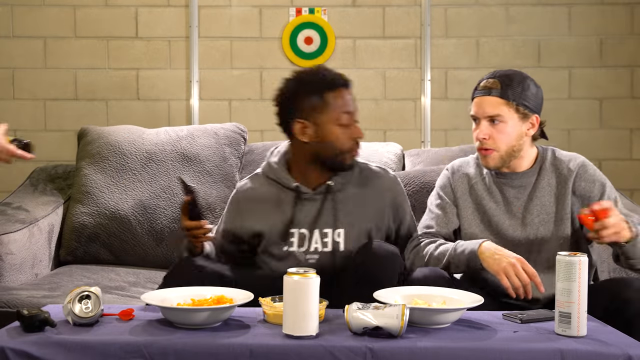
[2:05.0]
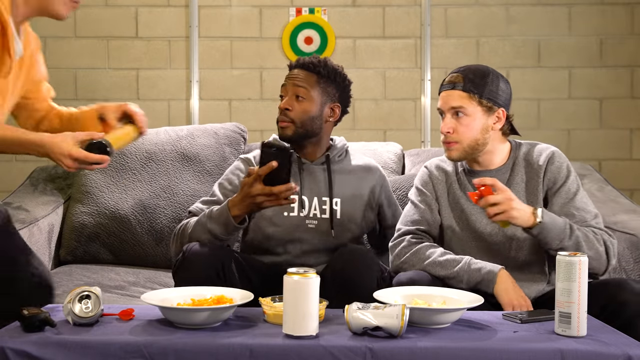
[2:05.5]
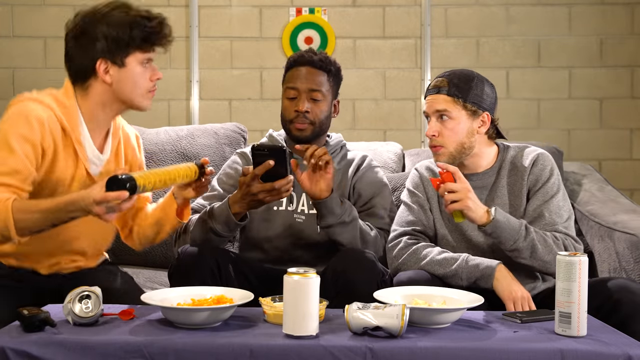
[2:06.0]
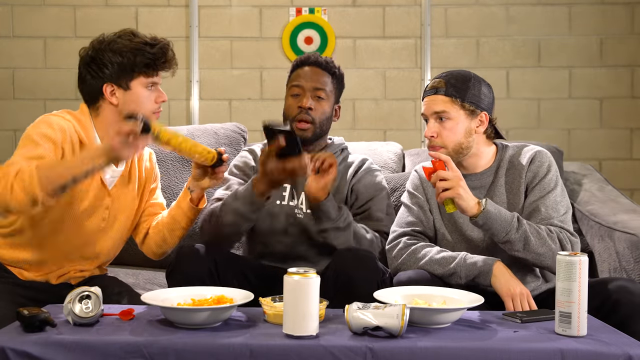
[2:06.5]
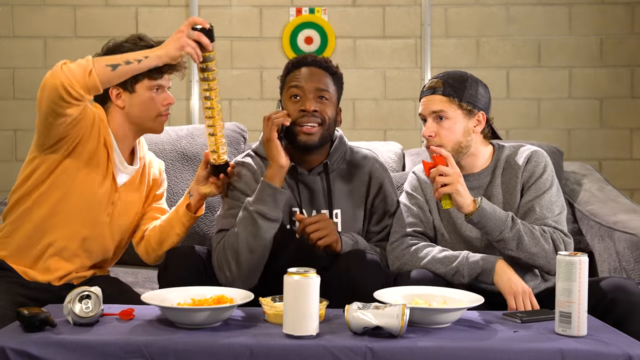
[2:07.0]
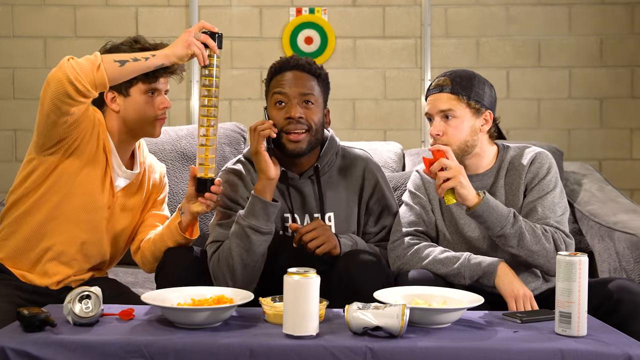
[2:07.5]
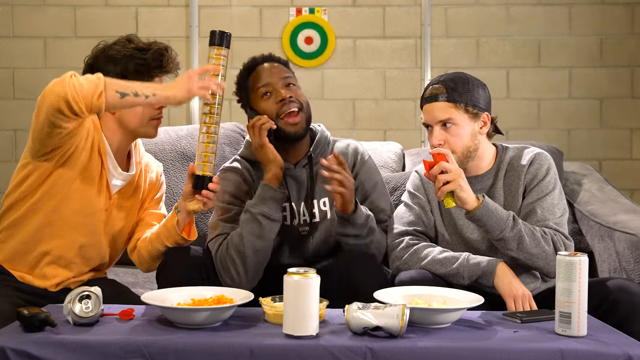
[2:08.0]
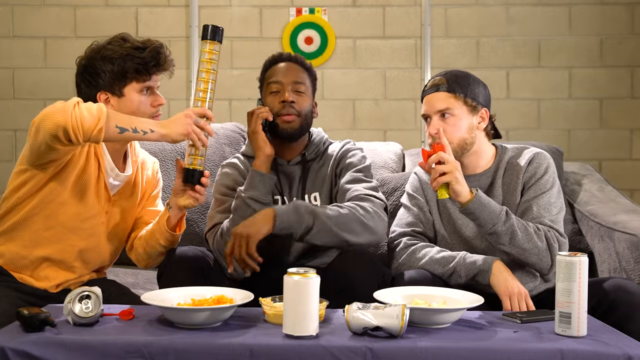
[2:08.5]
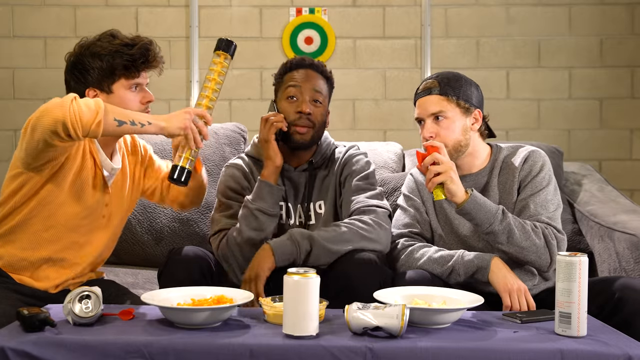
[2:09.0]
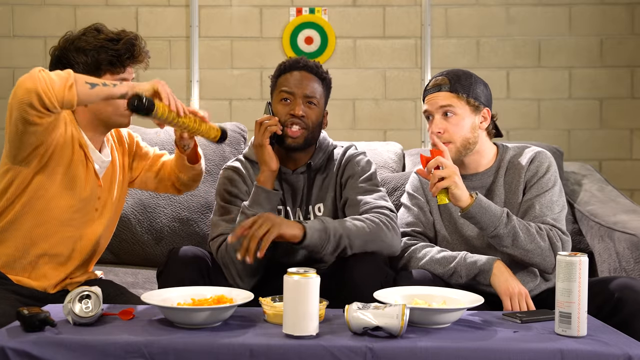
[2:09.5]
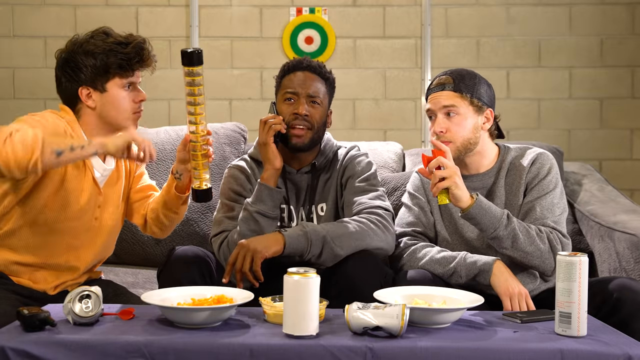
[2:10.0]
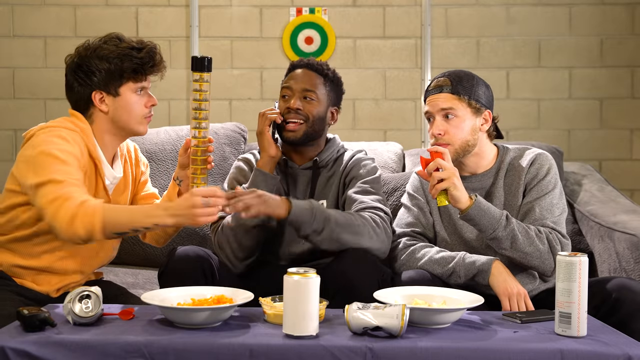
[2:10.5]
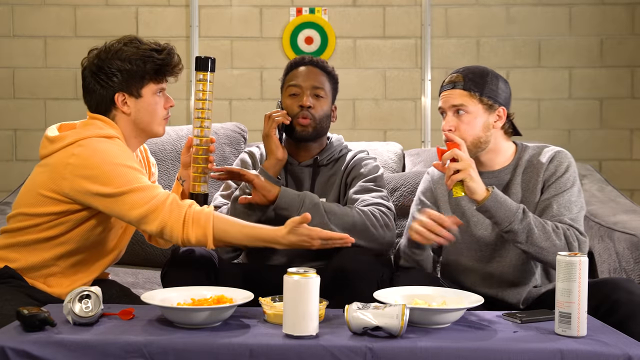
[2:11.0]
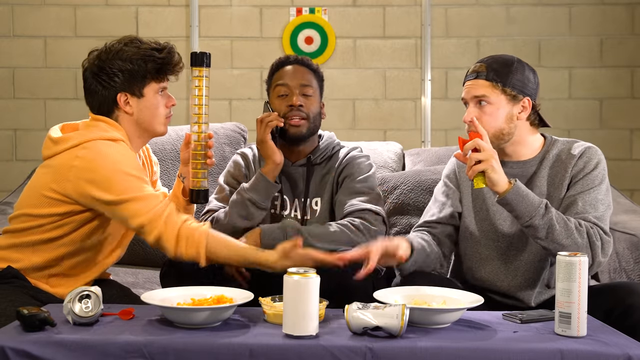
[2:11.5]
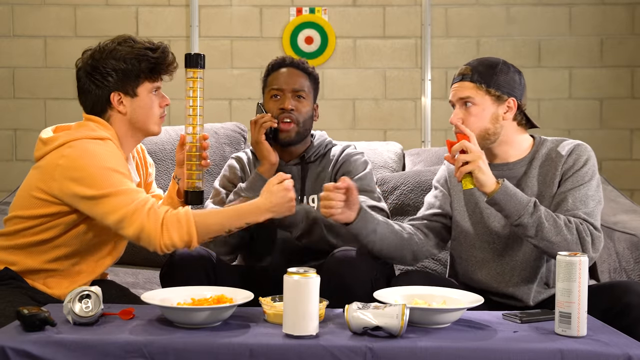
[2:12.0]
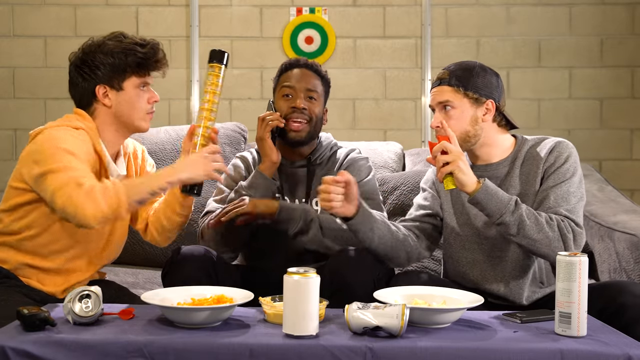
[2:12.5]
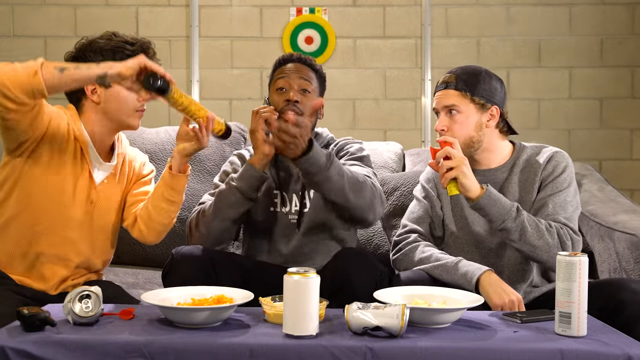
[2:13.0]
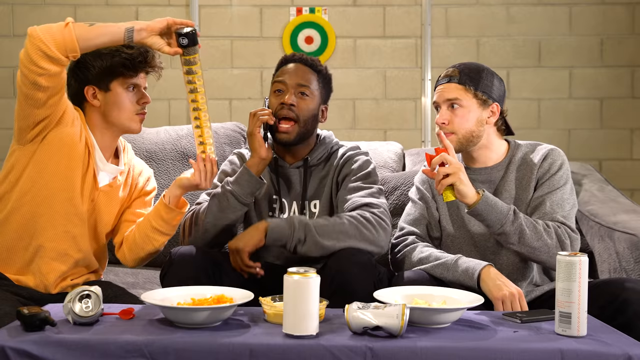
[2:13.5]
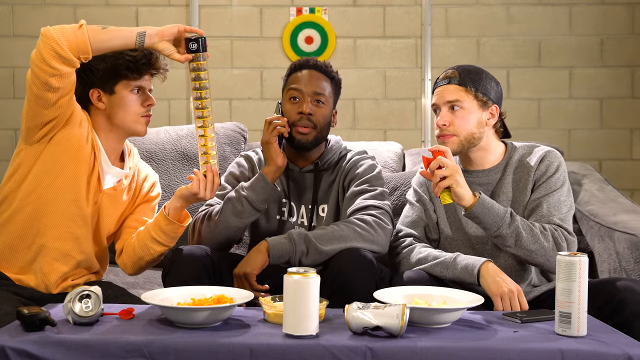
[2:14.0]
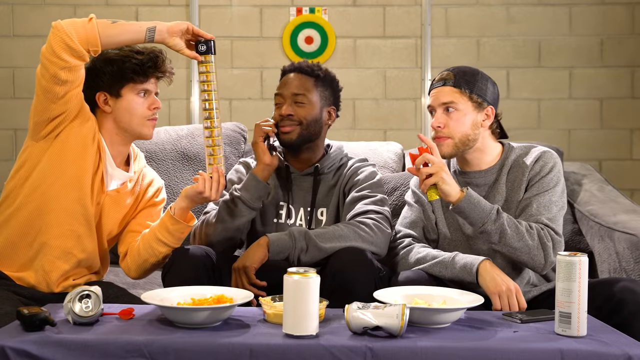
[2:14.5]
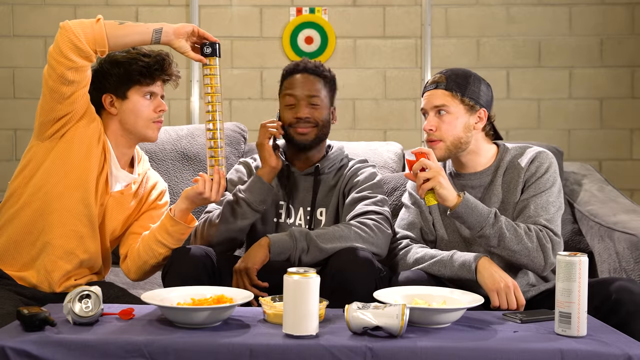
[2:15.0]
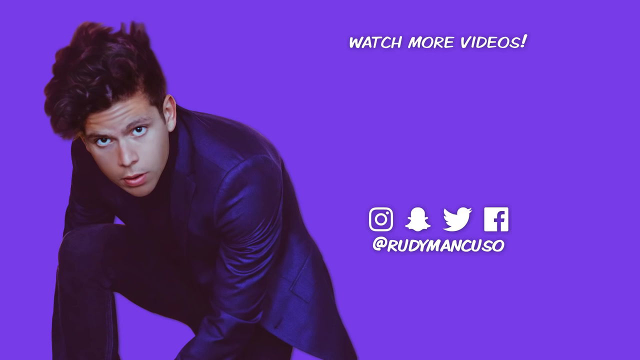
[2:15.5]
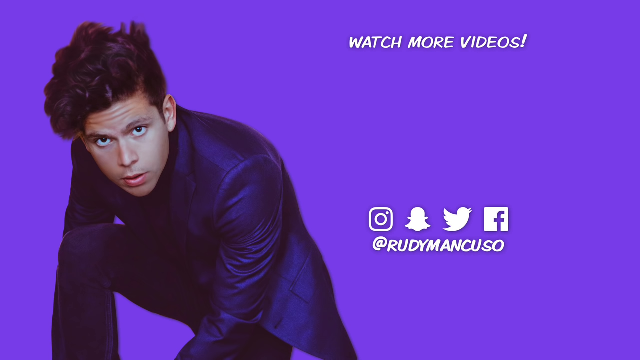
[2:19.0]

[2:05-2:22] The black man is now on a phone call, sitting in the middle of the couch, having traded spaces with the man in the orange hoodie. The man on the right picks up the red and yellow air horn and looks like he is pressing the button in, watching the man on the phone as he does. The man on the phone waits until the other man sits down to answer, then just talks, looking left and right with a smile on his face as the two other men make noise. The man in orange who was previously on the phone picks up the toy that makes noise and moves it up and down, then high-fives the man on the right with the air horn. Ads are then shown. The man in the orange hoodie has a tattoo on his wrist and on his forearm, visible more clearly here.